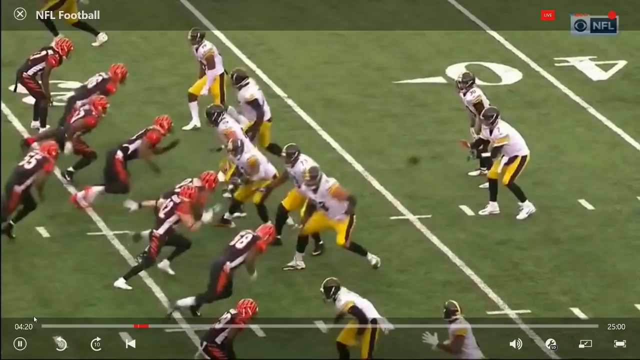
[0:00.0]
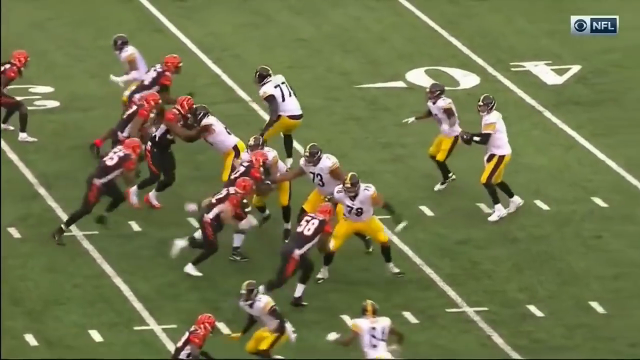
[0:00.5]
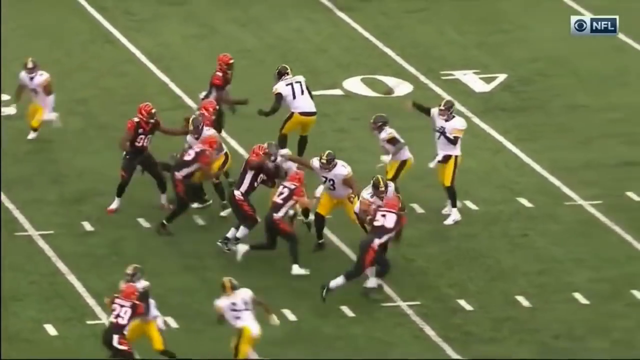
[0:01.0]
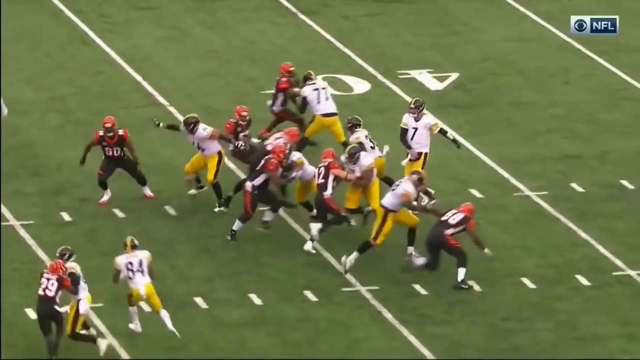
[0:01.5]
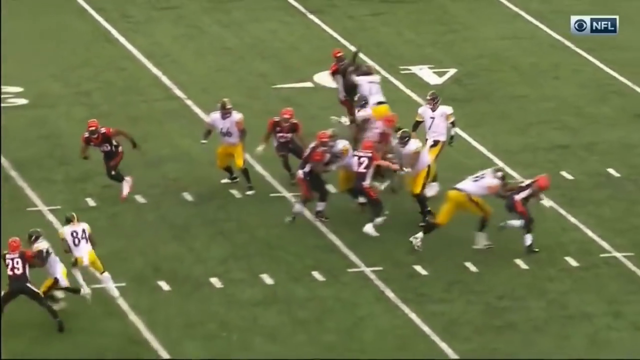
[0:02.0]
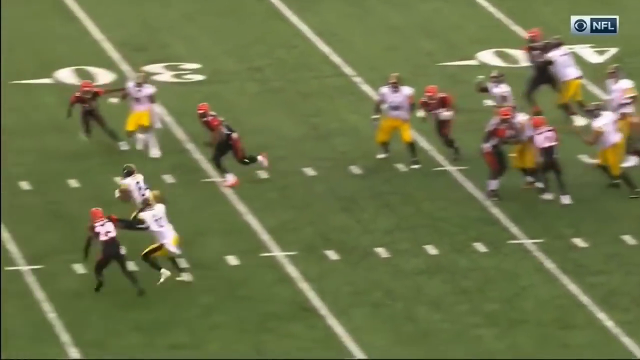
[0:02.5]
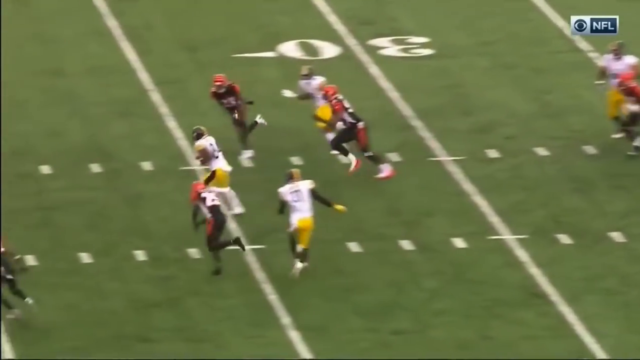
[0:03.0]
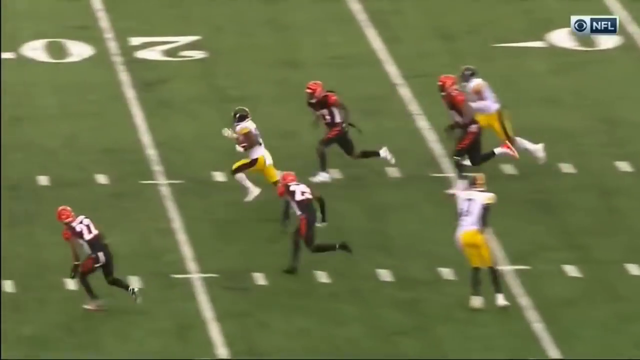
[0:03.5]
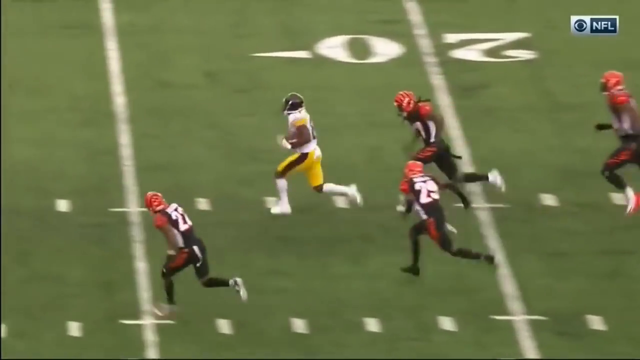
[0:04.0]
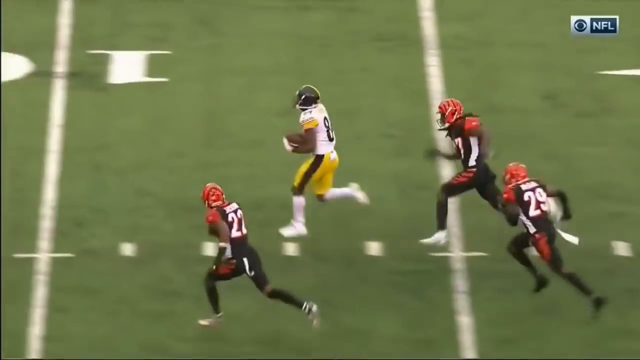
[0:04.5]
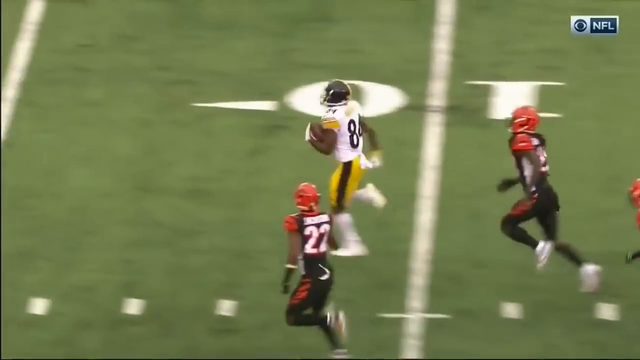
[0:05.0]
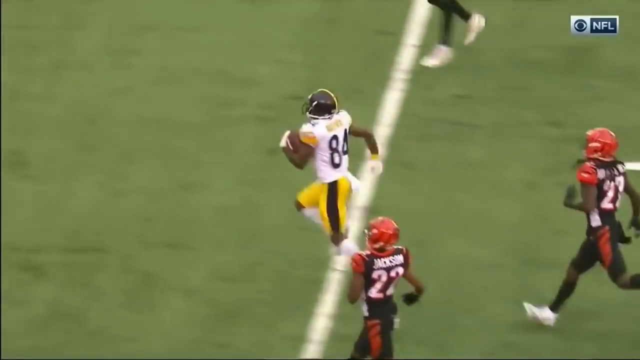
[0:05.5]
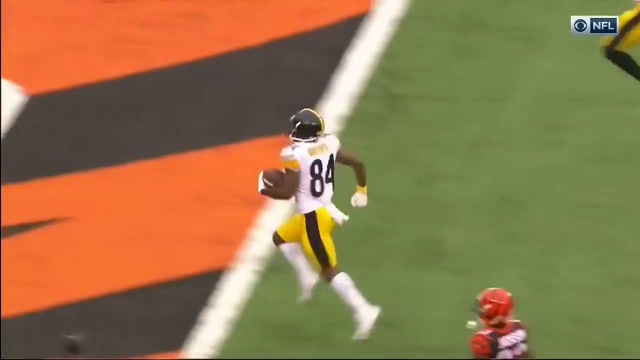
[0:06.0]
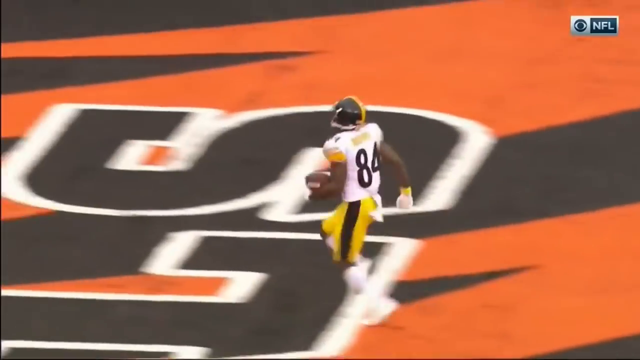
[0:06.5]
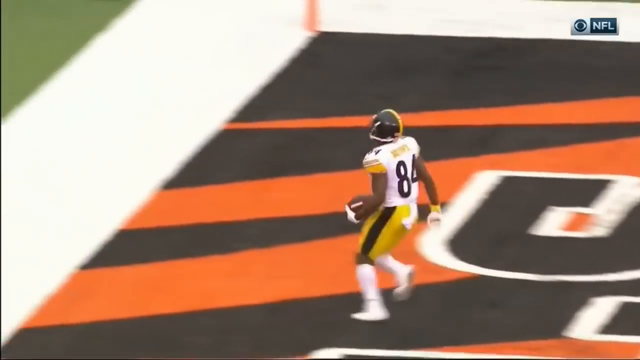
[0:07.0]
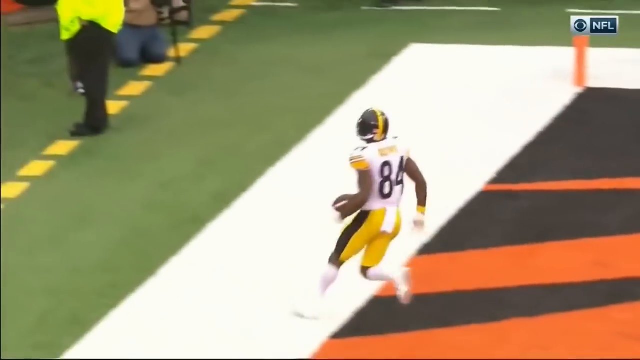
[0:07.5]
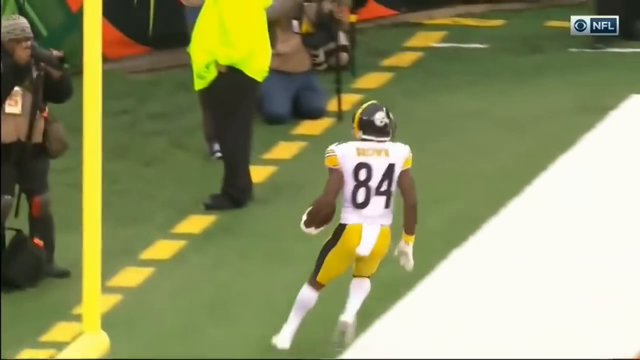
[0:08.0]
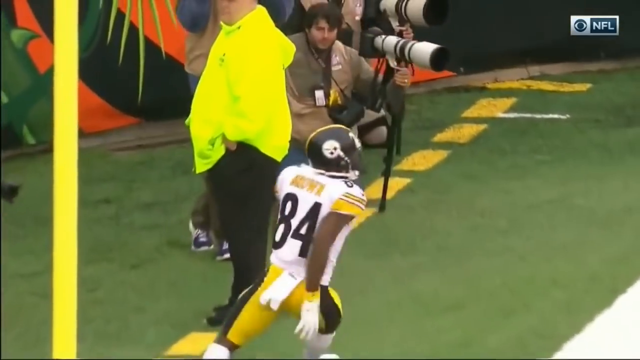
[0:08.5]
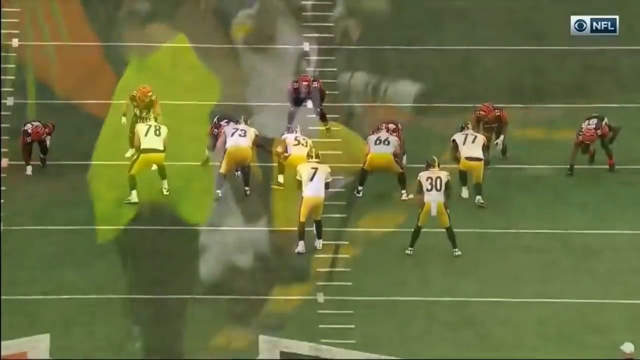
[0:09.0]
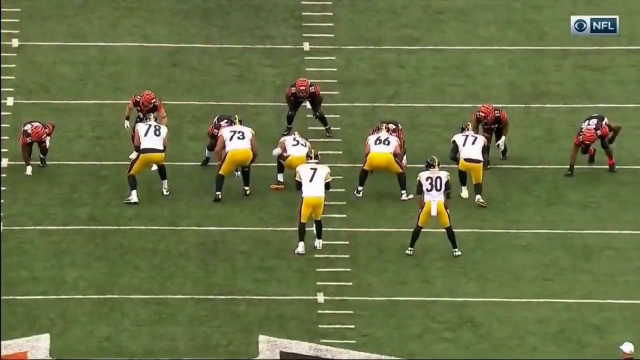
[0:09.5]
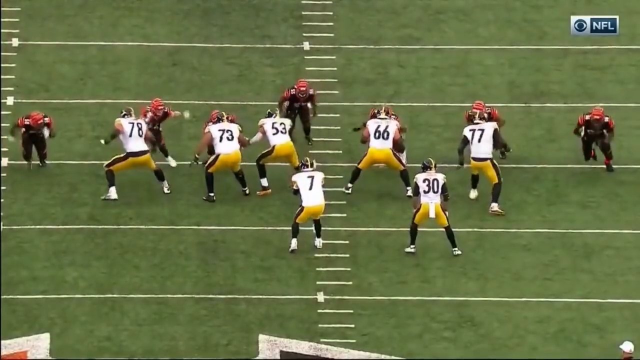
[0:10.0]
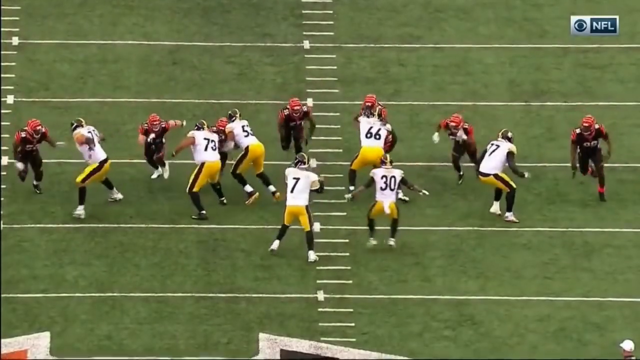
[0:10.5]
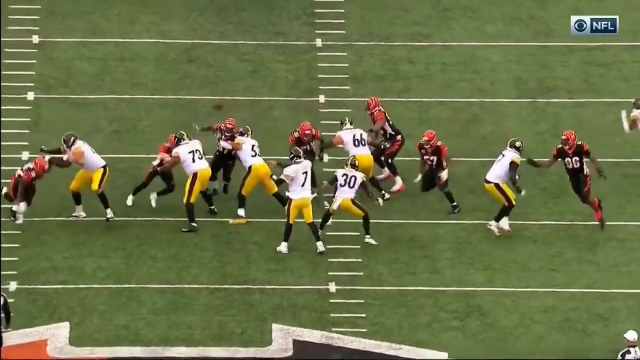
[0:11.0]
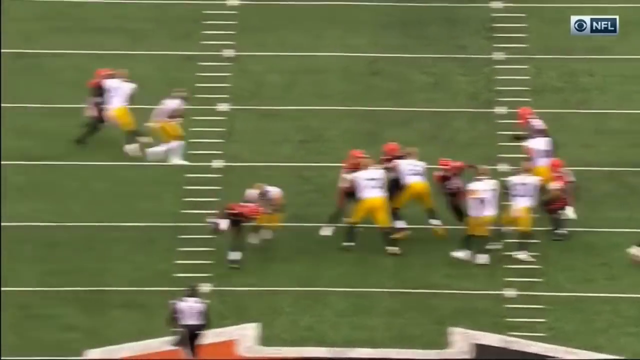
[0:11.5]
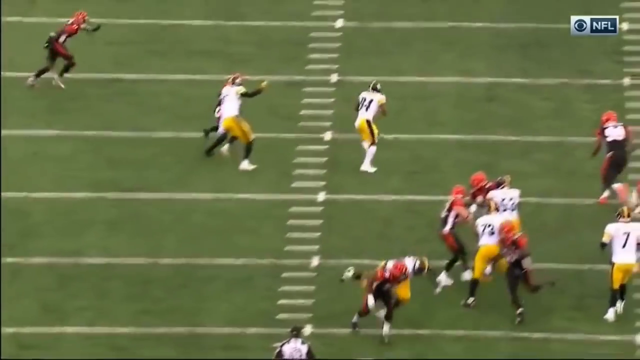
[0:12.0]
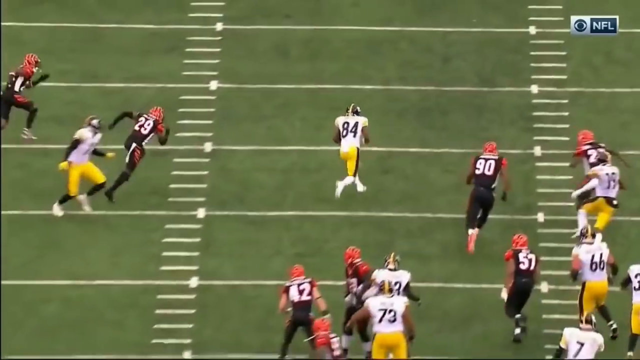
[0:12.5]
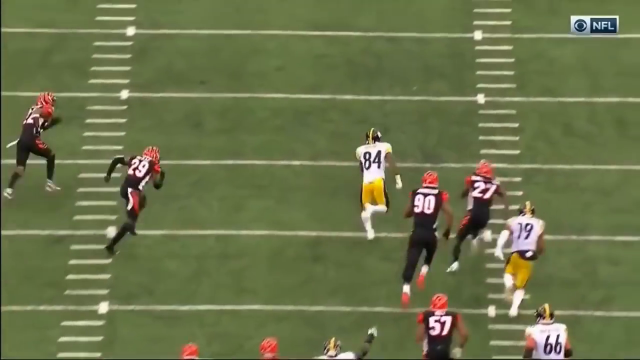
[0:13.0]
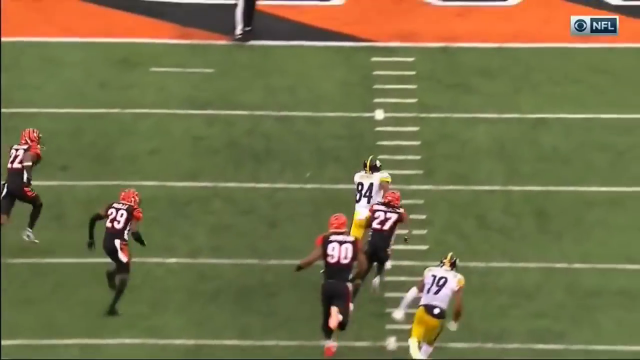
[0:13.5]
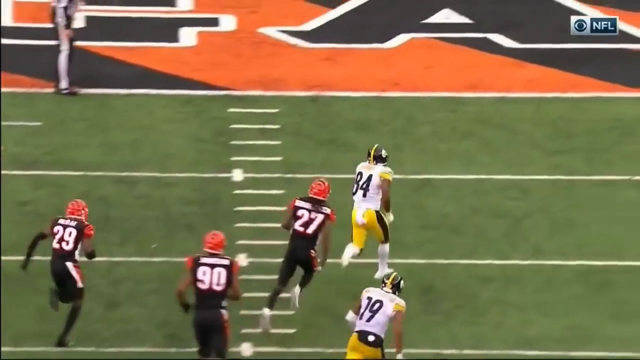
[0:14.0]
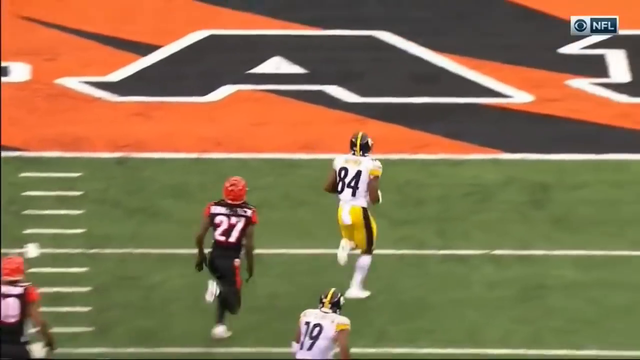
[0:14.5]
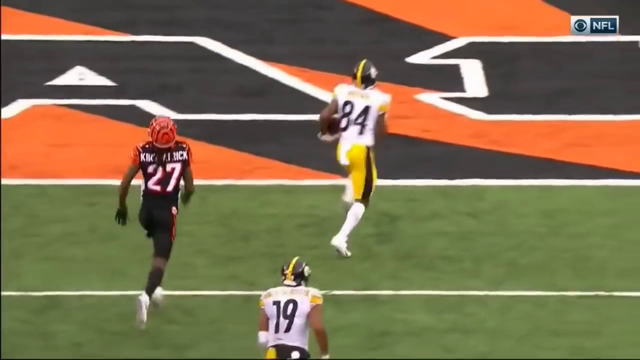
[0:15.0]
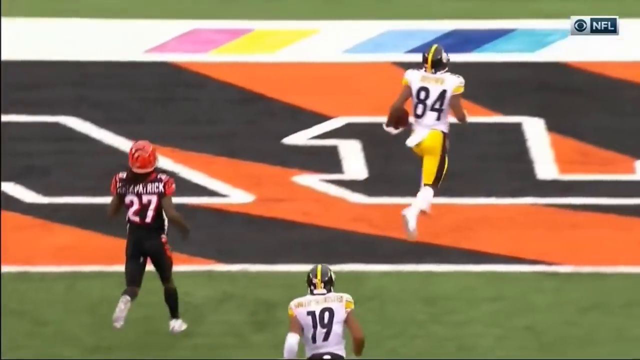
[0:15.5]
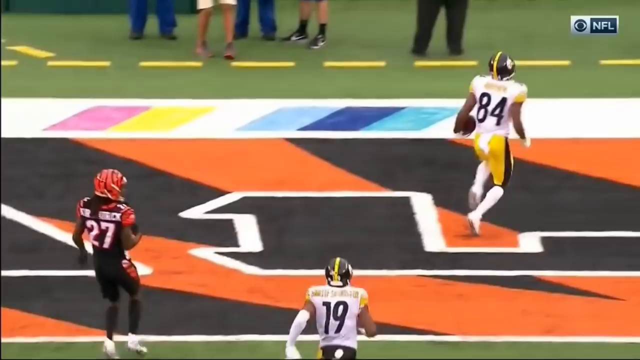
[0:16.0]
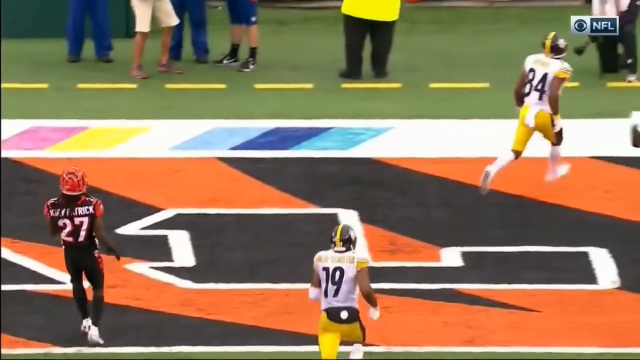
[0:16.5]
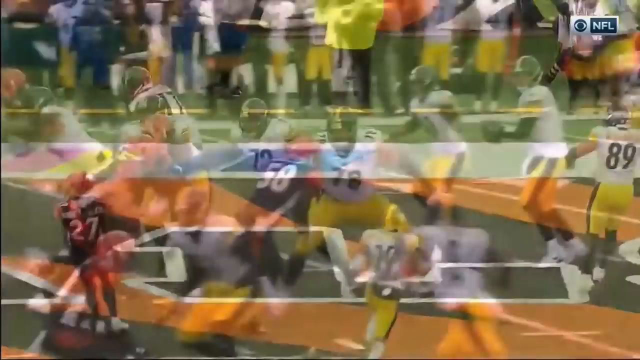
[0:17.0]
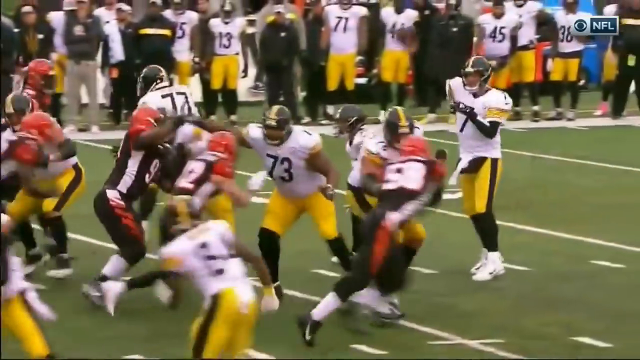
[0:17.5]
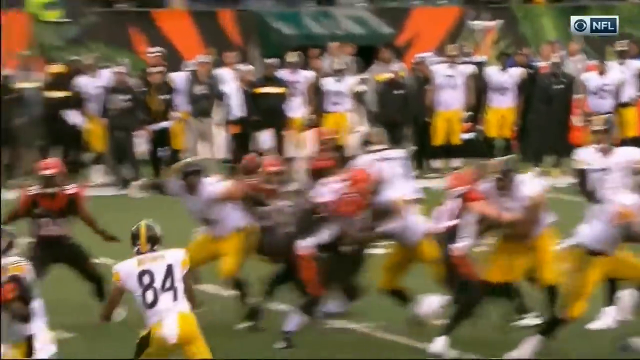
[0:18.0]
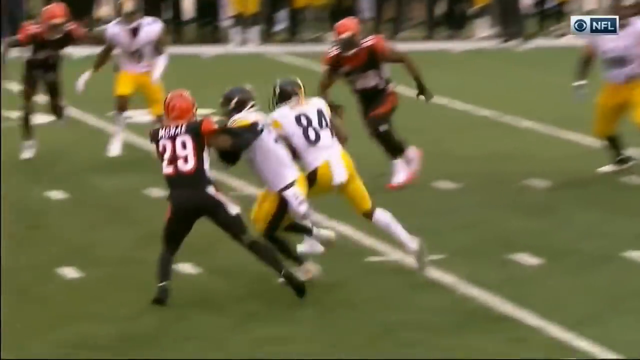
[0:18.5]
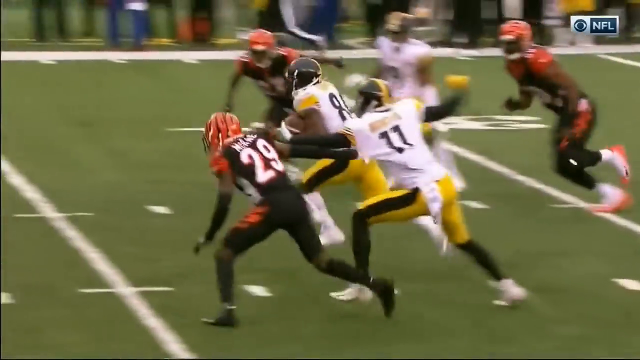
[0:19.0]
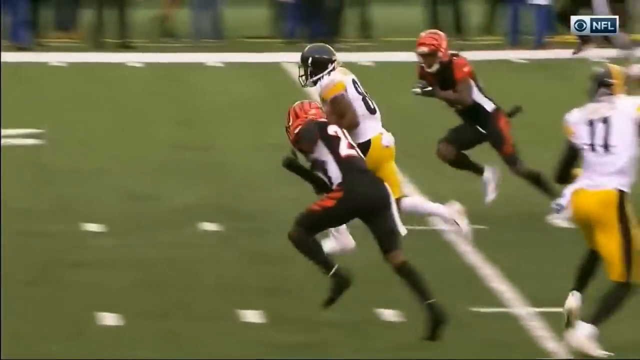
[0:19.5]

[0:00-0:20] A football game begins with two teams squaring off and starting to run at each other. The ball is hiked to the quarterback. The team on the left wears red, brown and white jerseys; the team on the right wears white jerseys with yellow and black pants and black socks. The quarterback holds the ball and appears to get ready to throw, then makes a small toss forward that seems to be caught by number 84, who starts running with the ball and reaches the 20-yard line. Four players from the other team pursue him, but he appears to outrun them, and he runs into the end zone. Judging from the logo in the end zone, the team in orange and brown appears to be the Bengals. Number 84 jumps in the air in celebration. A replay of the play then begins, with the team lined up and the ball hiked back.